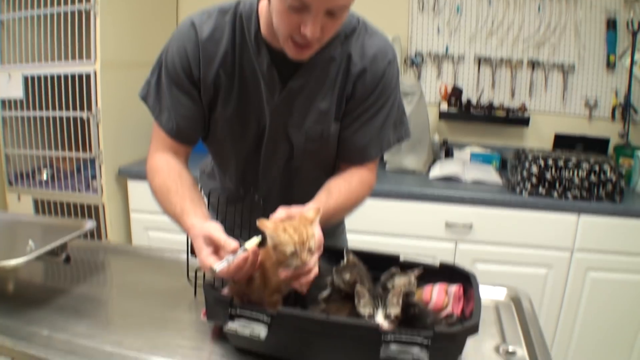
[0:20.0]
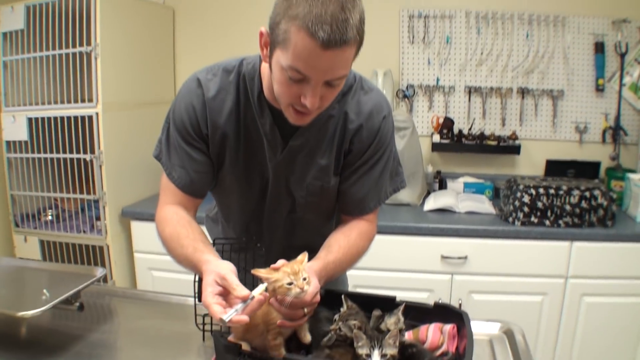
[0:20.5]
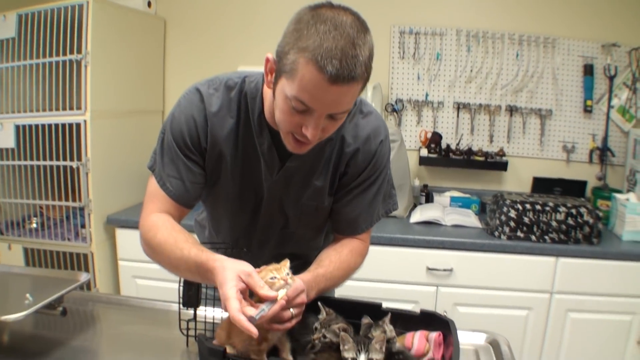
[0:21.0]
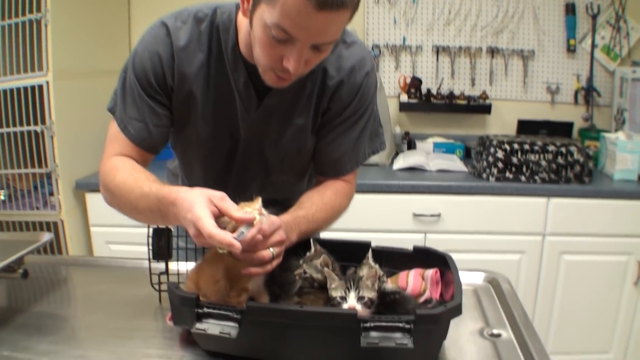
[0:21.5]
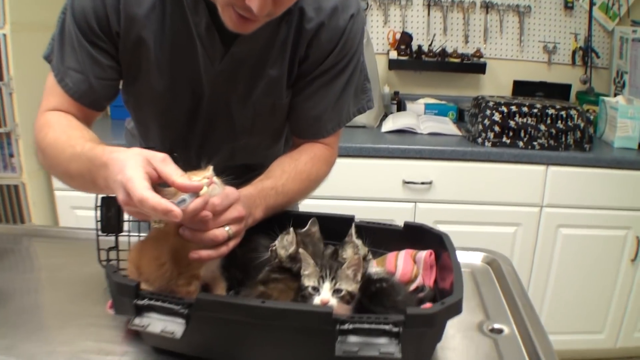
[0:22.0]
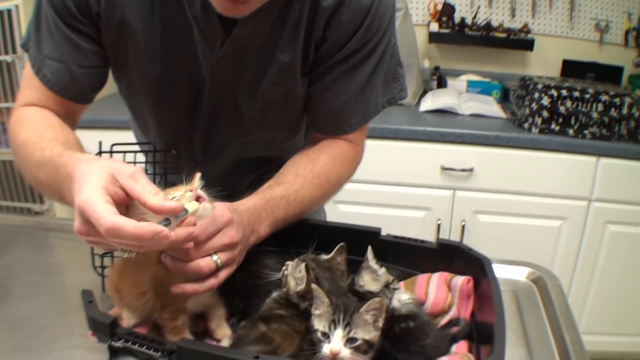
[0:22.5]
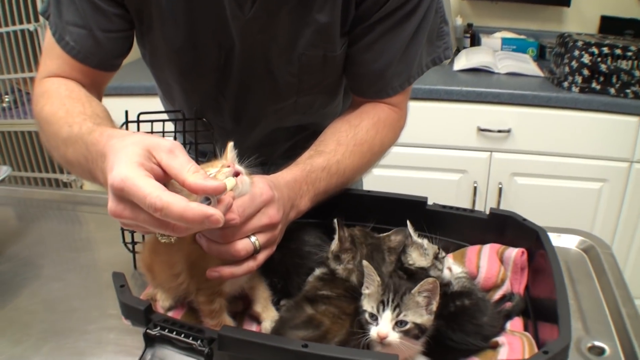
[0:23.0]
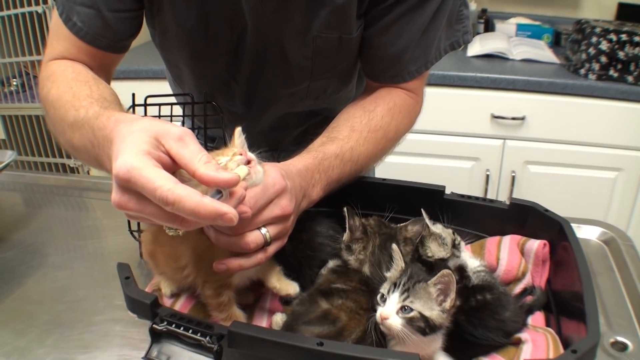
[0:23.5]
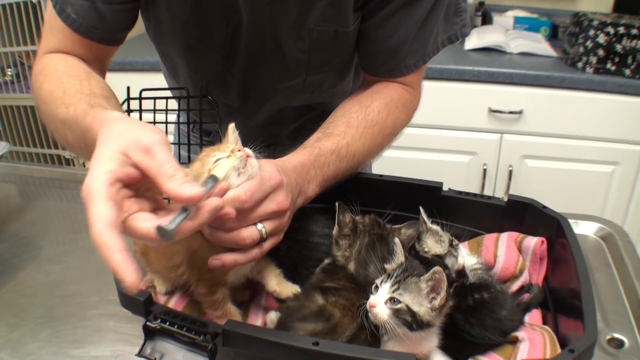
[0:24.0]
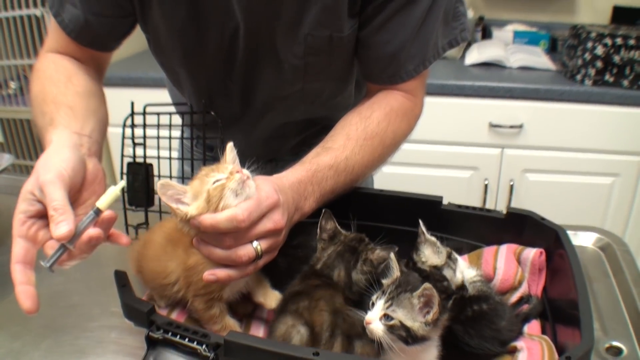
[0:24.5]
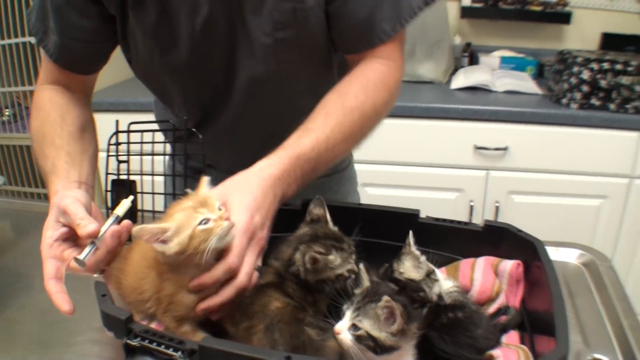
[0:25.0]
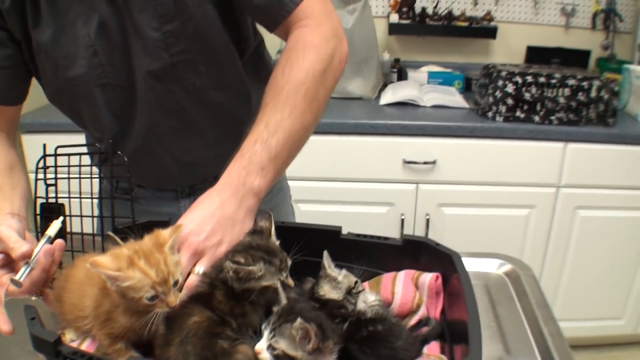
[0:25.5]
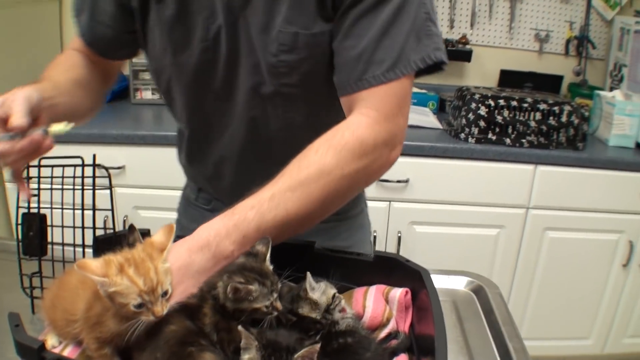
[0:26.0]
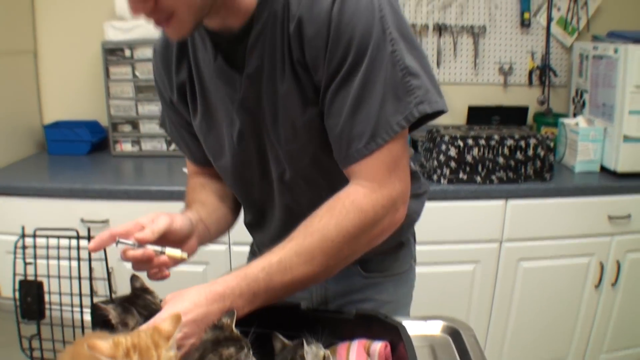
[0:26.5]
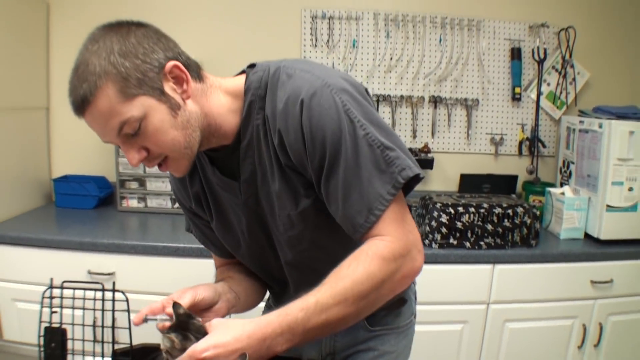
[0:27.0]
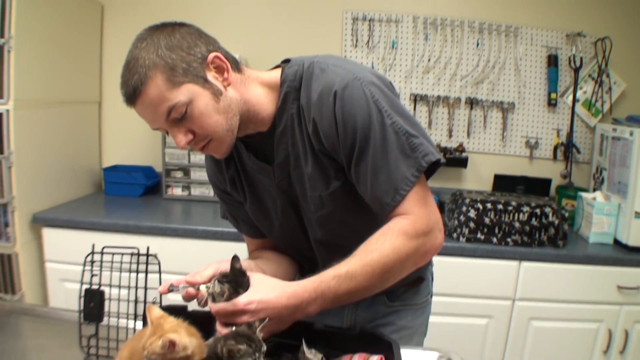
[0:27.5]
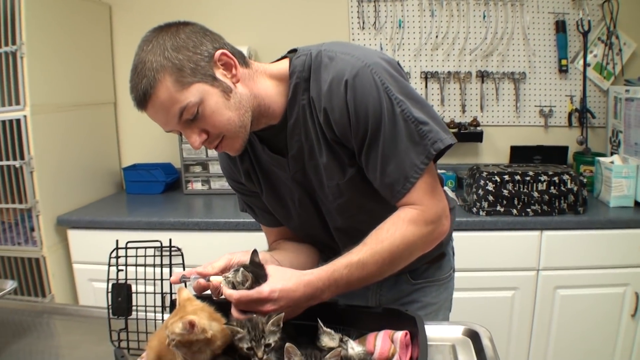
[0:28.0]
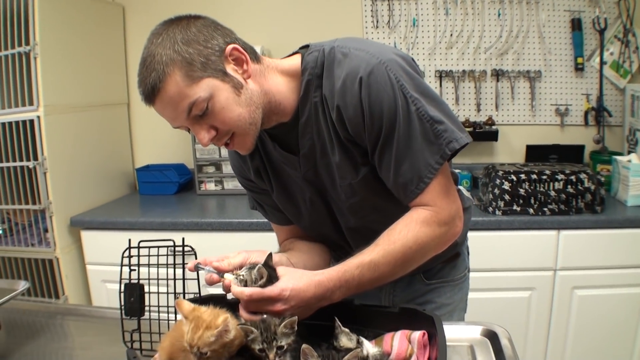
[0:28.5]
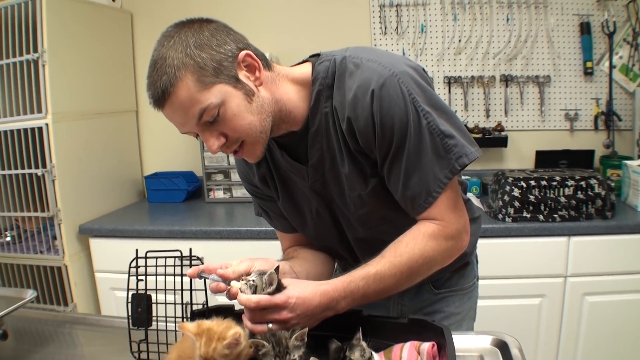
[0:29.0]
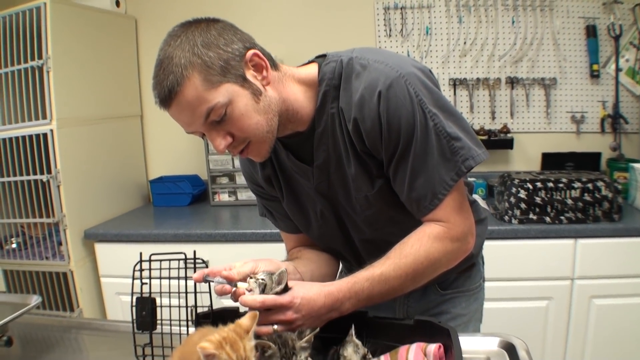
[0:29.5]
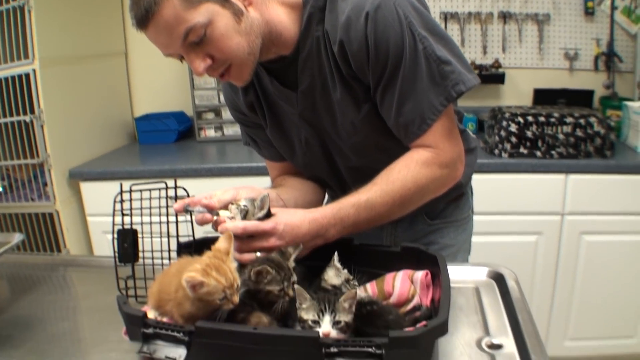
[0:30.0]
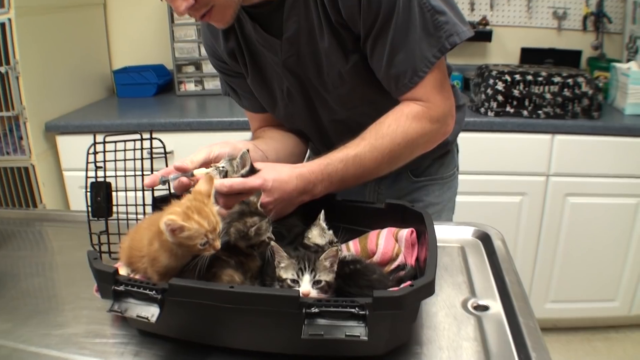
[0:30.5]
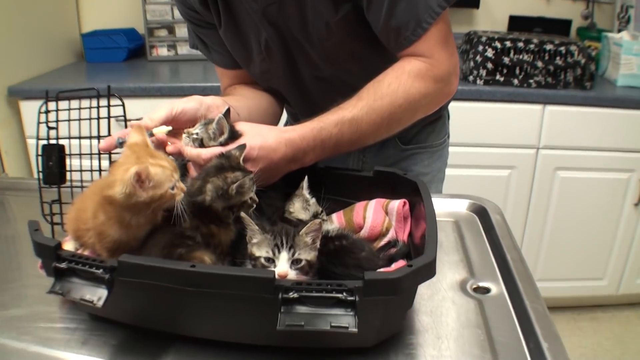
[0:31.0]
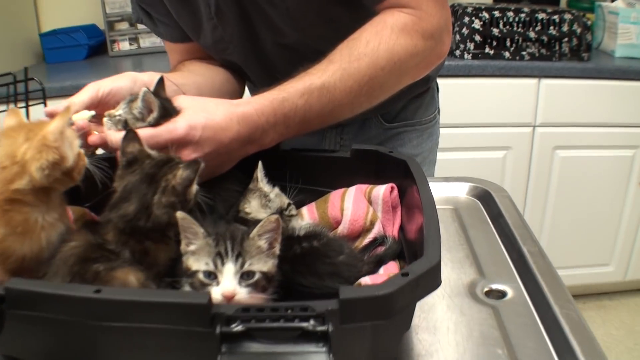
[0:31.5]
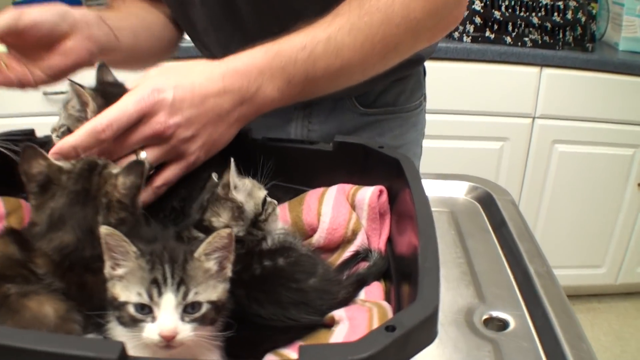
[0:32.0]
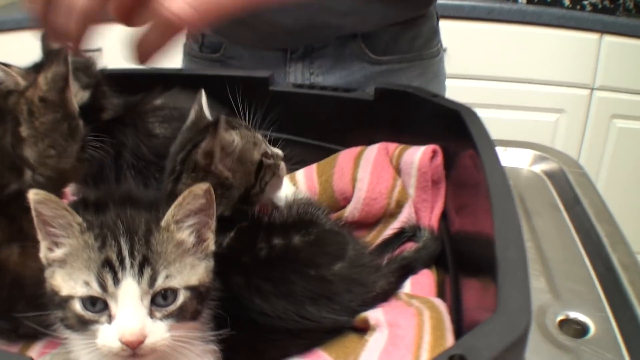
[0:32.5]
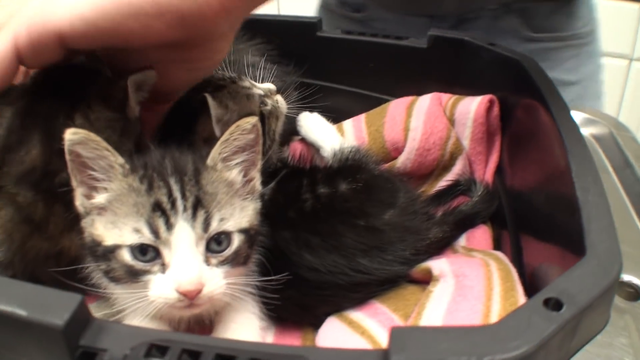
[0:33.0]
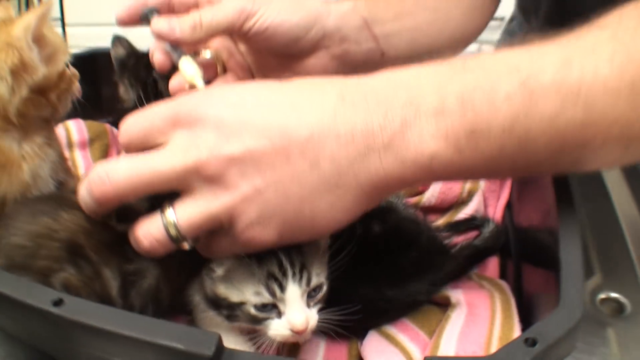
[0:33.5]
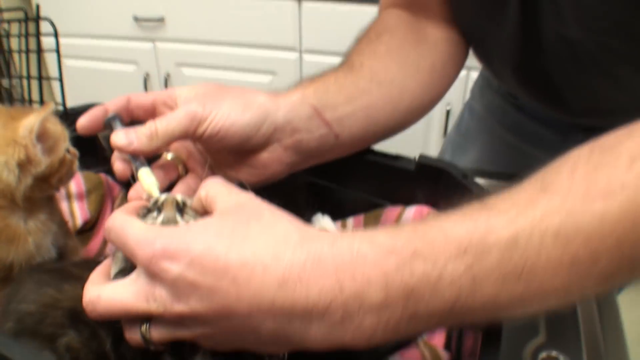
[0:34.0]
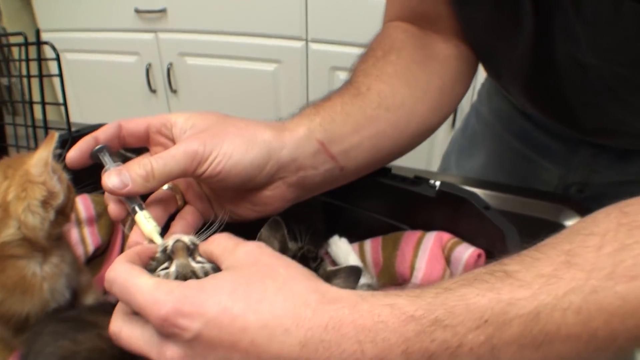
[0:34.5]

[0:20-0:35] The kittens at the vet clinic are now all getting medicine in their mouths. A vet tech applies it with a syringe, going to each little mouth and squirting the fluid in; only one person is working on them now. The kittens are calmer than when they were getting what looked like their shots. They are all licking their fur and look more content than before, sitting on a pink and beige striped blanket. The ginger kitten is all alone there but seems happy with the rest of the group.